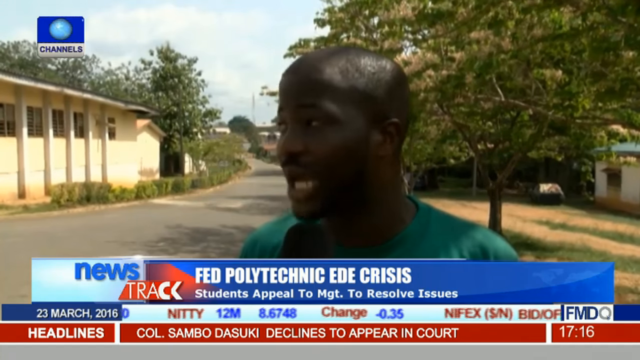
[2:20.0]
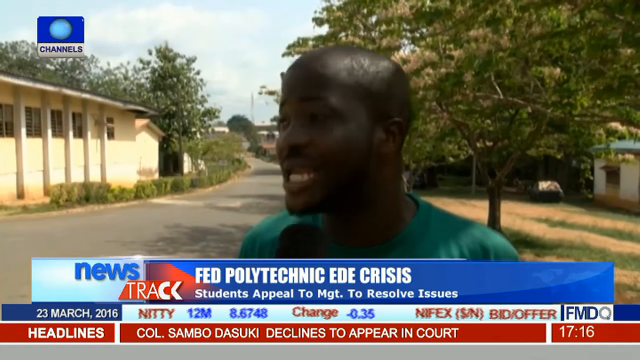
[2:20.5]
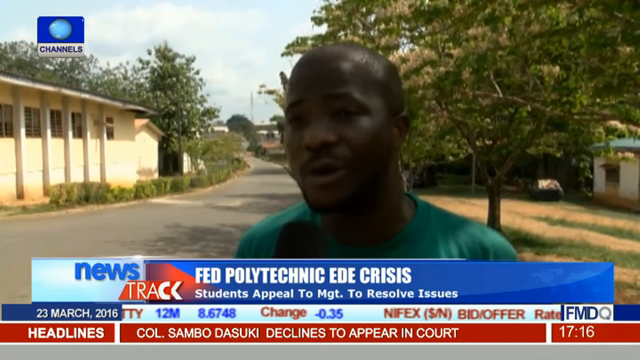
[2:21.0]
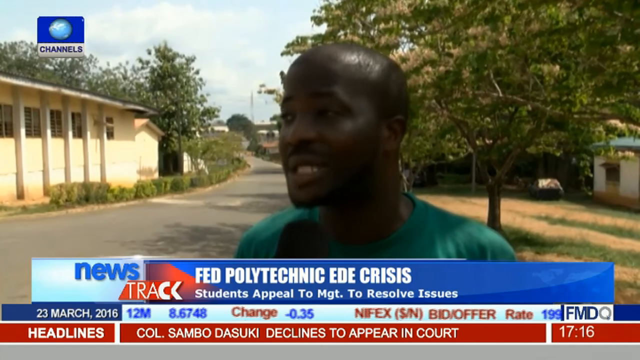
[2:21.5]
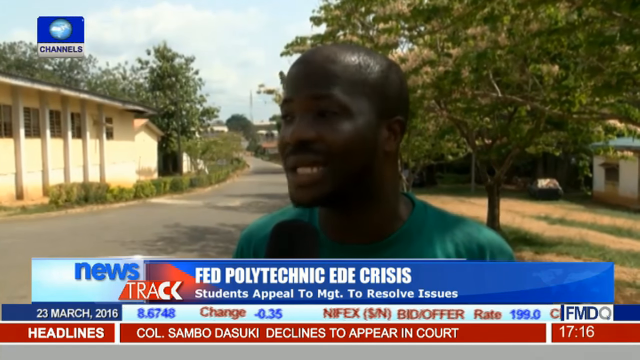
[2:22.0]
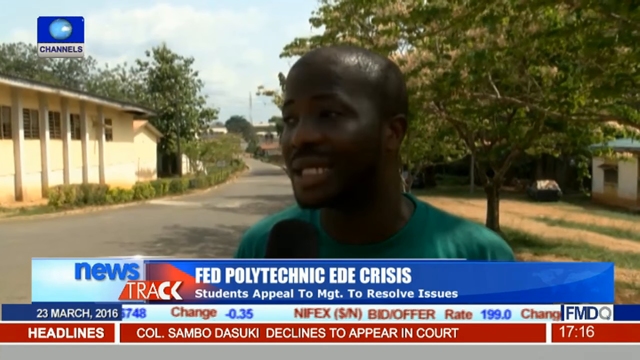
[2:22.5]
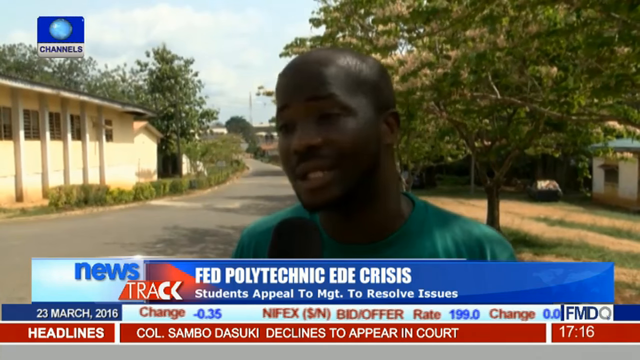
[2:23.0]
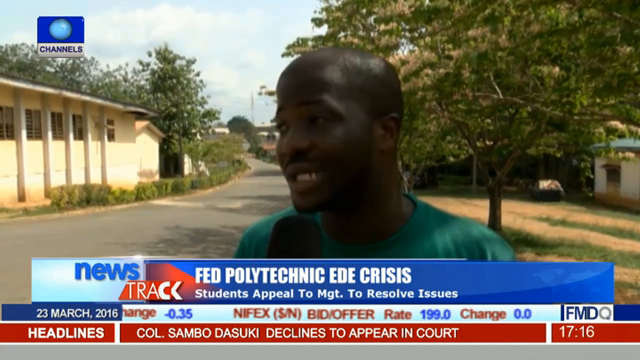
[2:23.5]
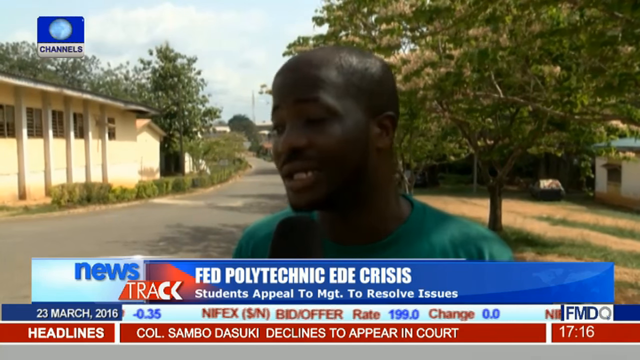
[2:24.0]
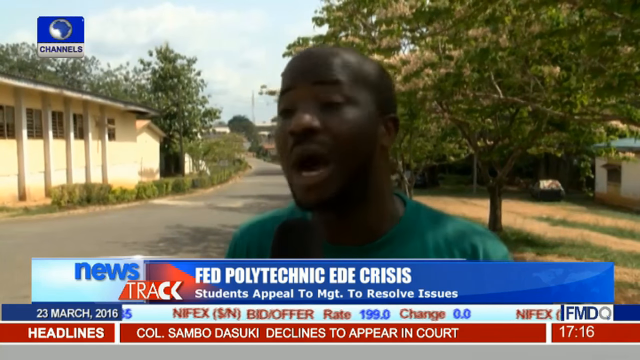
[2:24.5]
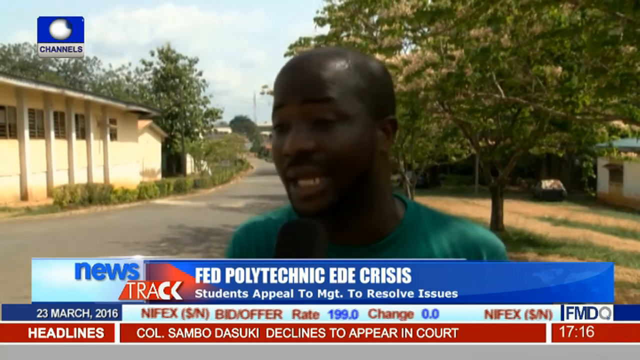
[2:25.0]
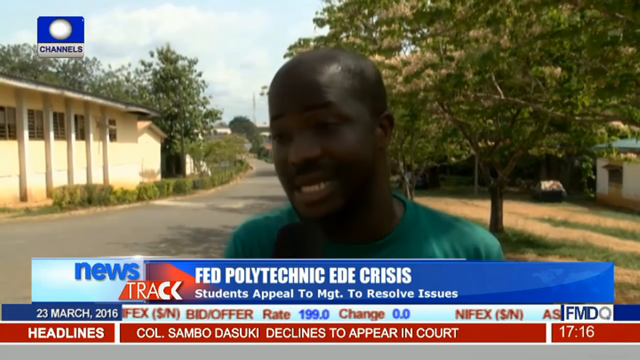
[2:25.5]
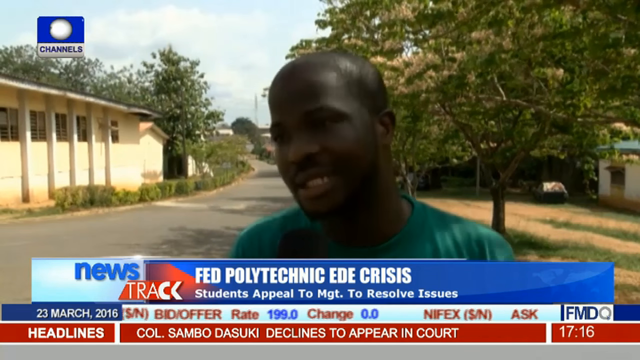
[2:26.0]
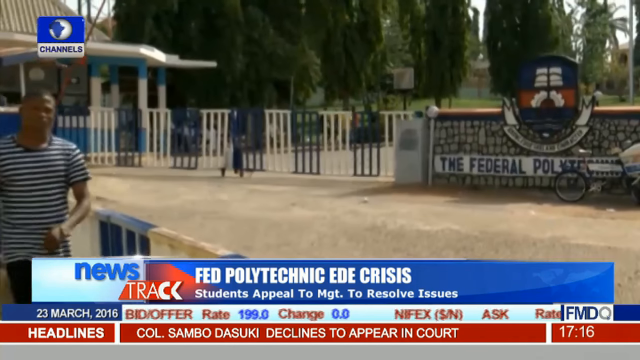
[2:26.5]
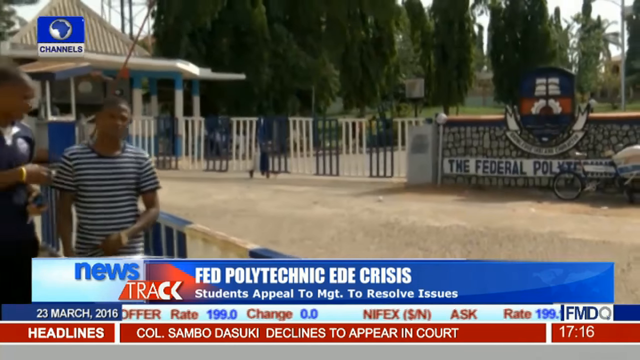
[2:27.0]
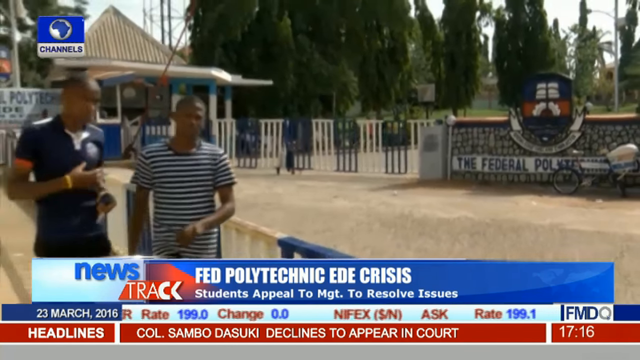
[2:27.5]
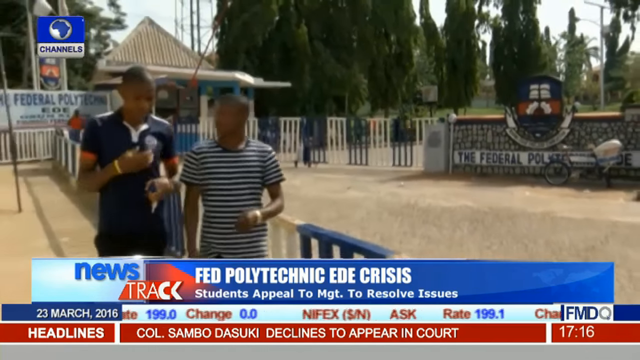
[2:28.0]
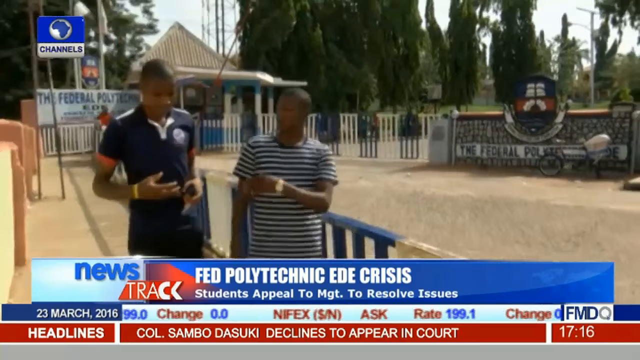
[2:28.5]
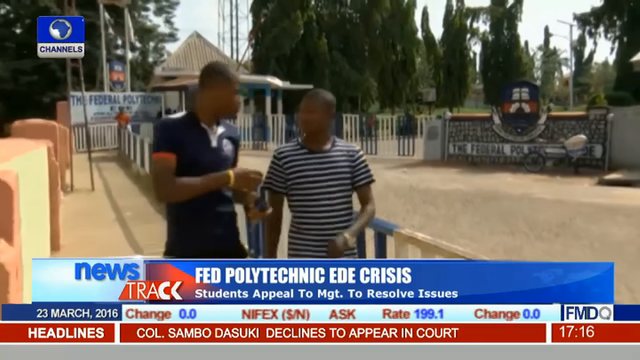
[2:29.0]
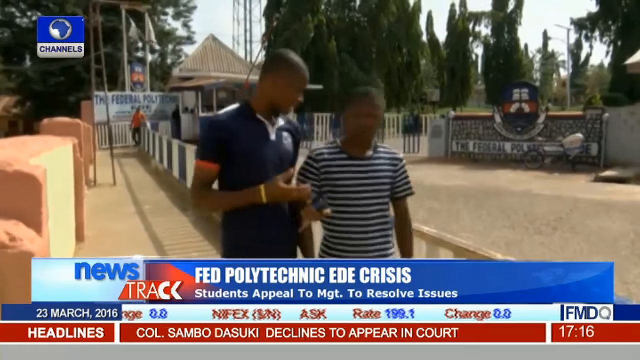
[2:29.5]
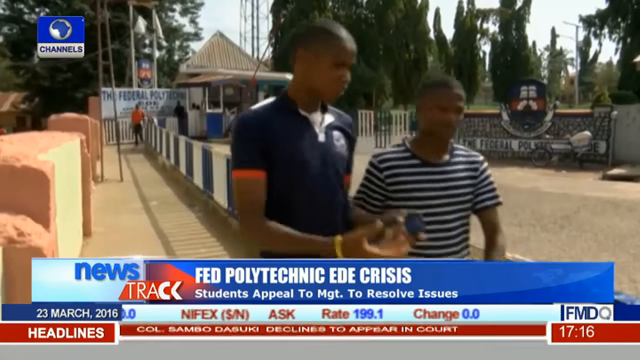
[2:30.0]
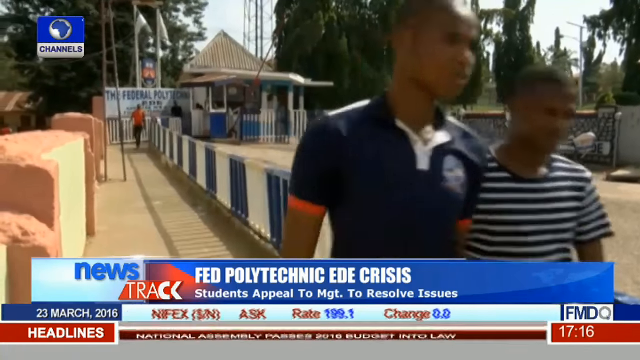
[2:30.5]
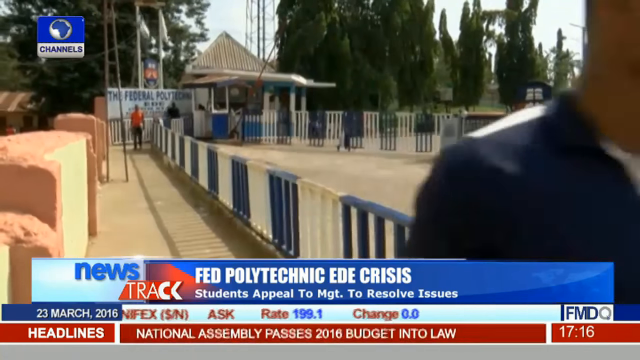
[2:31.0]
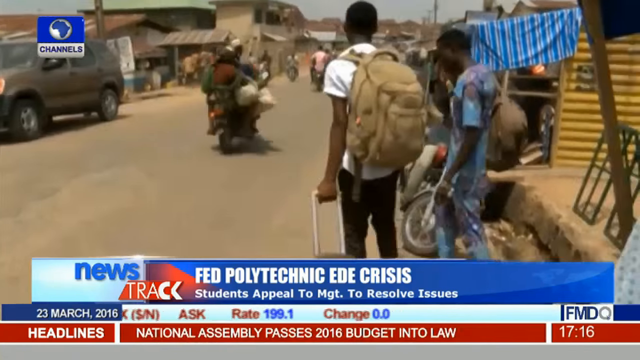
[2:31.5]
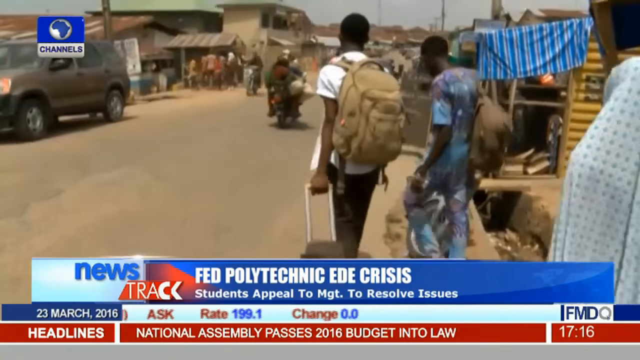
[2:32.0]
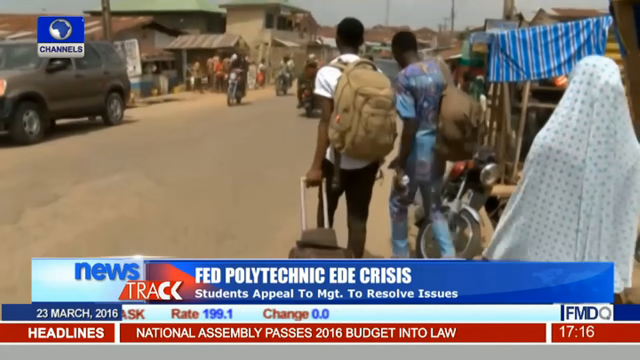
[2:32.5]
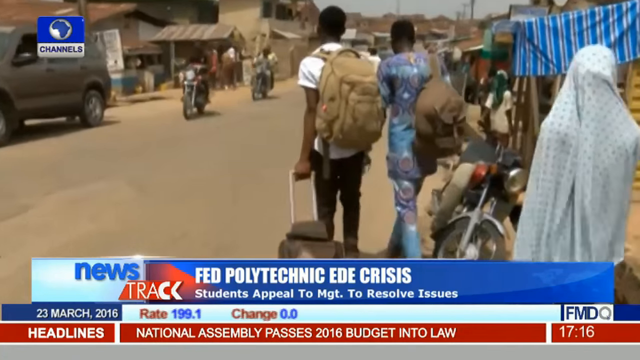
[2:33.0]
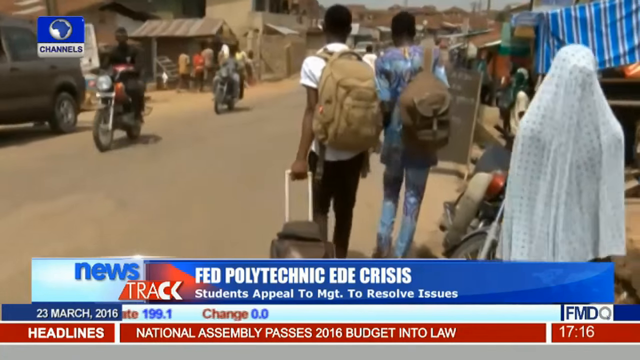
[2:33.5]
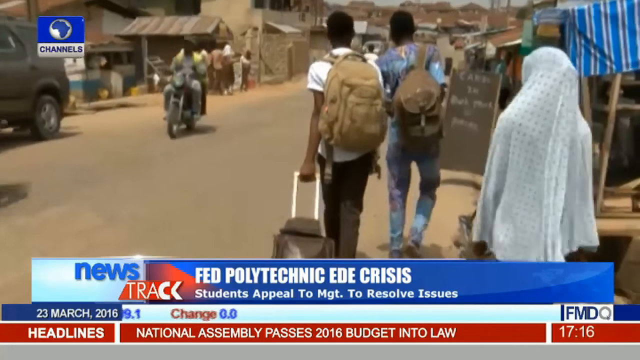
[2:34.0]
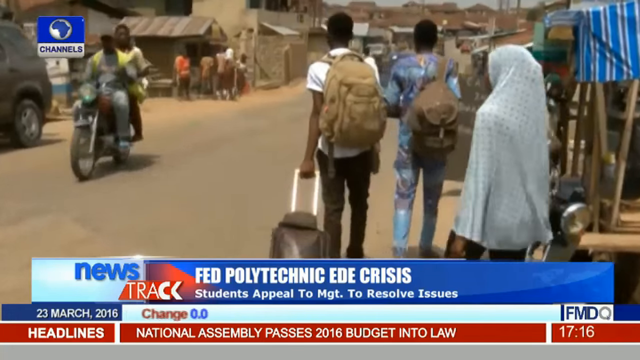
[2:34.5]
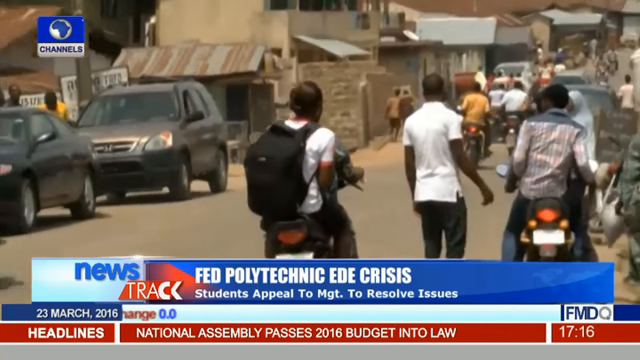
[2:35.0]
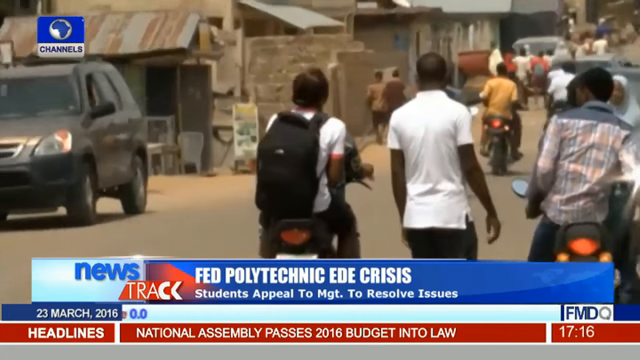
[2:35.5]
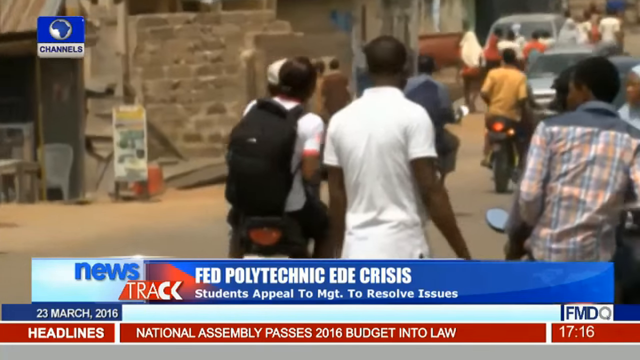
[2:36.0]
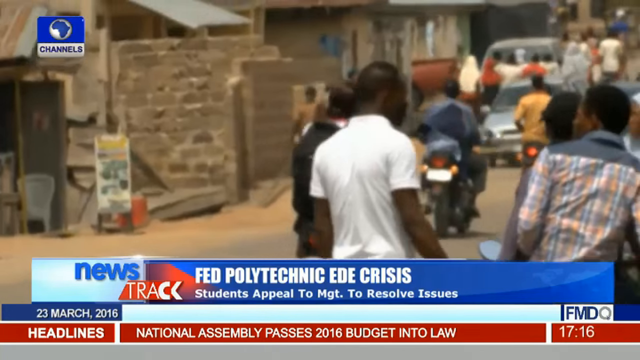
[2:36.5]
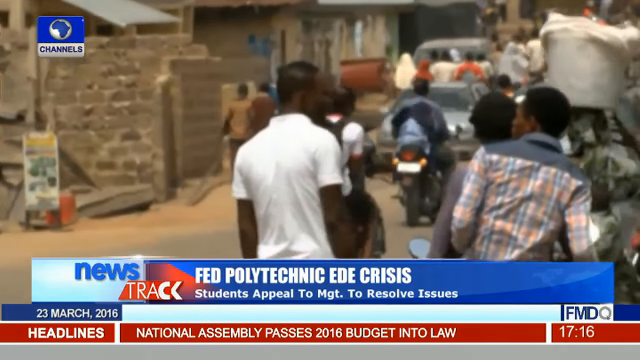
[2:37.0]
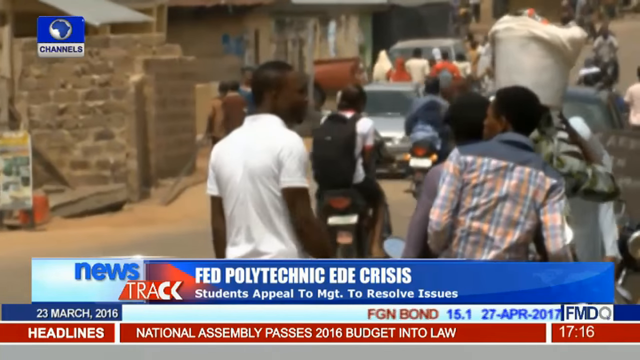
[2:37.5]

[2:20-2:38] A man is interviewed by a reporter, looking as if he is really thinking about what he is trying to say. He stands in front of what looks like the school building, the yellow building, with trees and grass behind him. The next shot shows what looks like some students walking near the parking lot, away from the school and into the camera's shot. Young people with backpacks and suitcases walk down a very poor street, almost as if they may be being forced to go home or leave the school. People in the streets ride motorcycles, and people talk to one another, looking like they might have to leave.